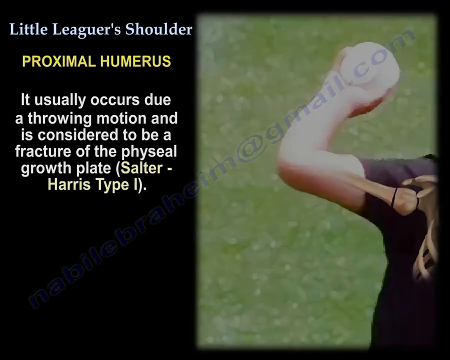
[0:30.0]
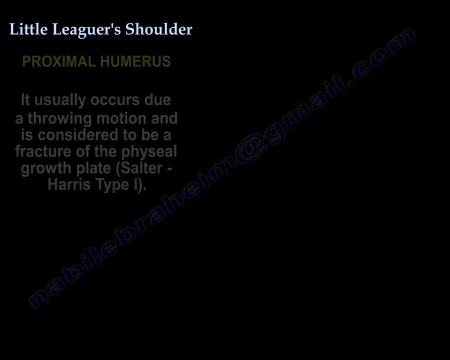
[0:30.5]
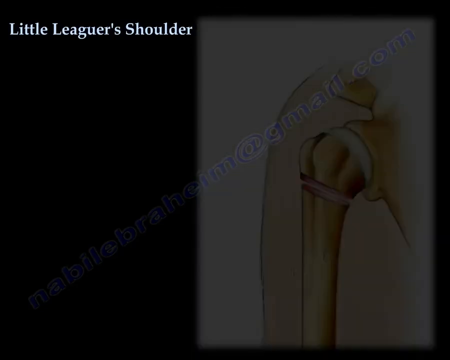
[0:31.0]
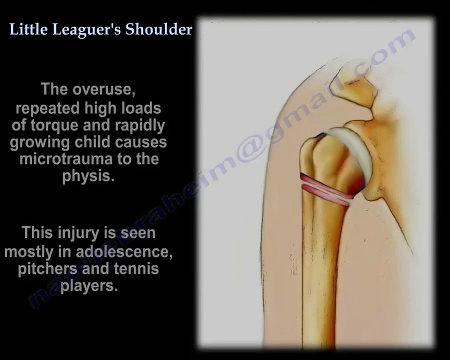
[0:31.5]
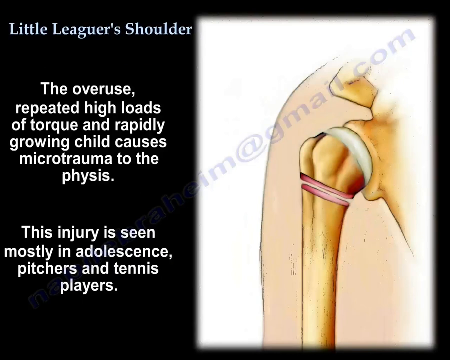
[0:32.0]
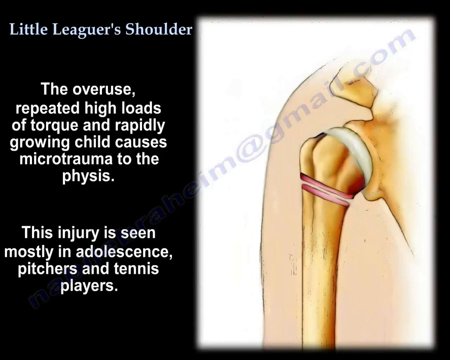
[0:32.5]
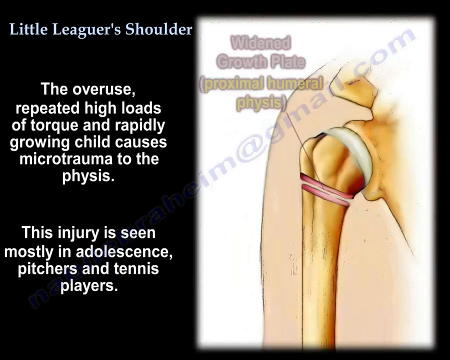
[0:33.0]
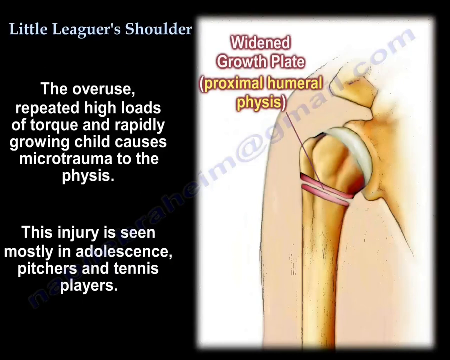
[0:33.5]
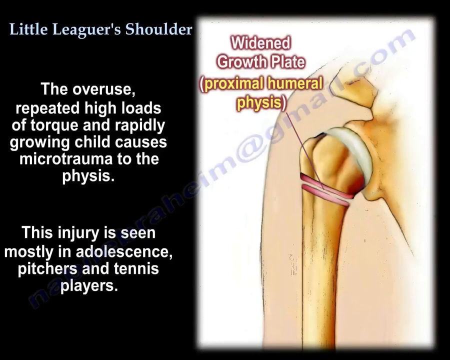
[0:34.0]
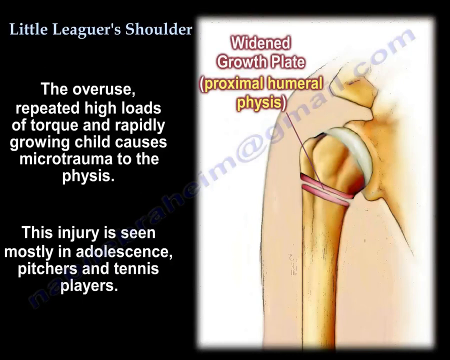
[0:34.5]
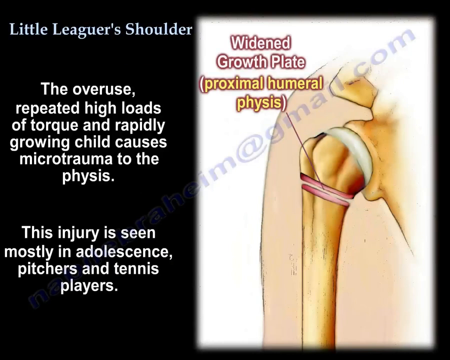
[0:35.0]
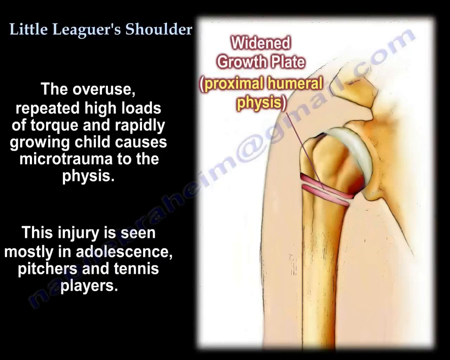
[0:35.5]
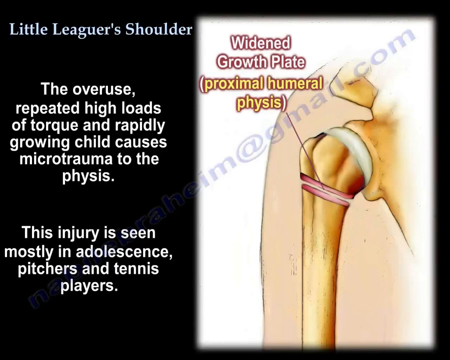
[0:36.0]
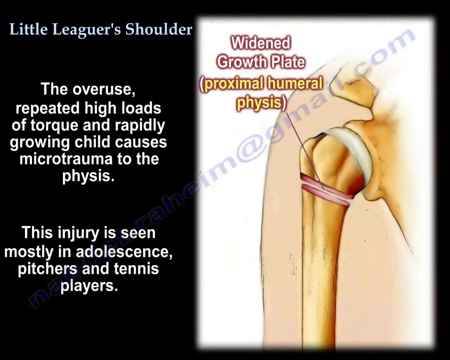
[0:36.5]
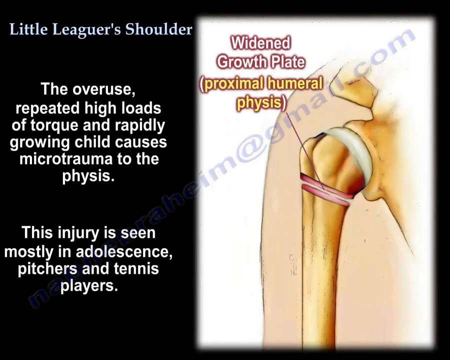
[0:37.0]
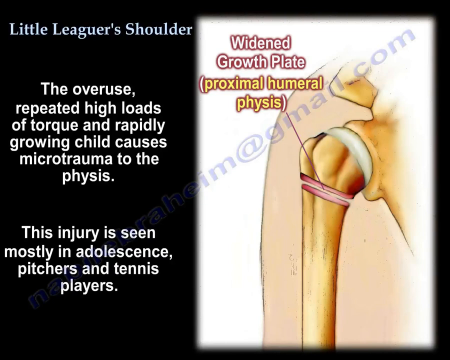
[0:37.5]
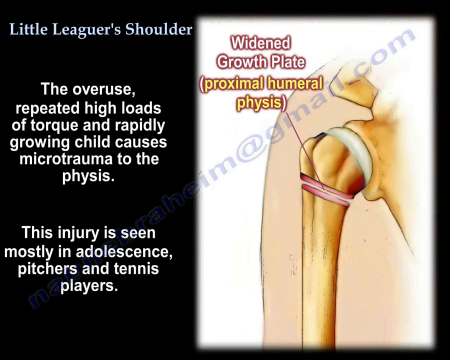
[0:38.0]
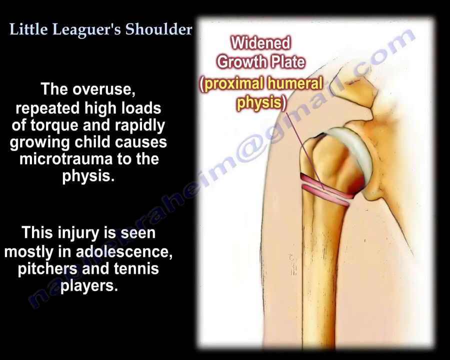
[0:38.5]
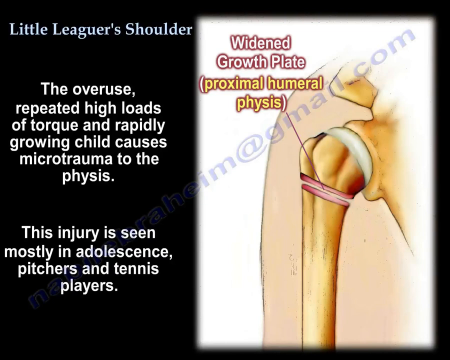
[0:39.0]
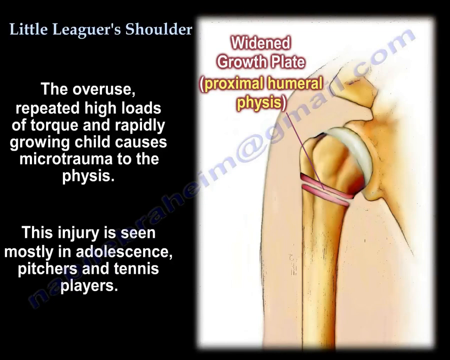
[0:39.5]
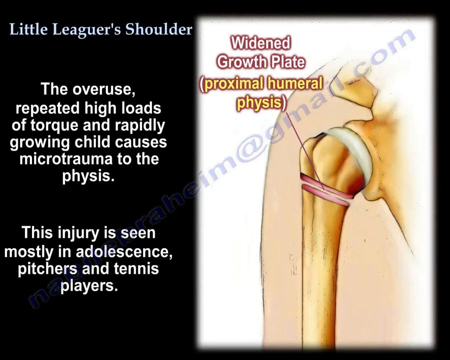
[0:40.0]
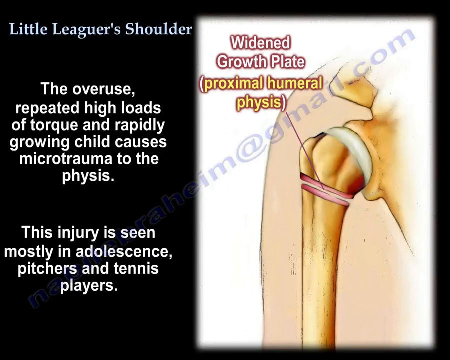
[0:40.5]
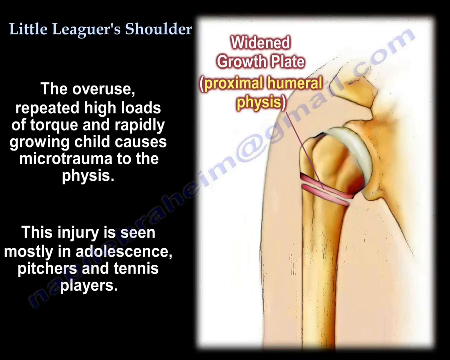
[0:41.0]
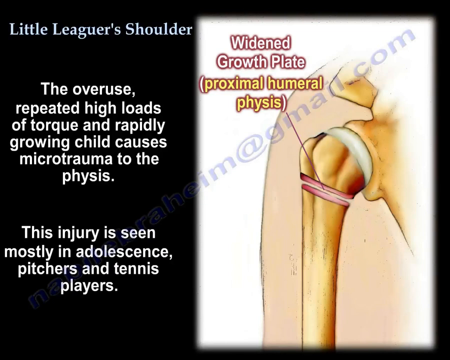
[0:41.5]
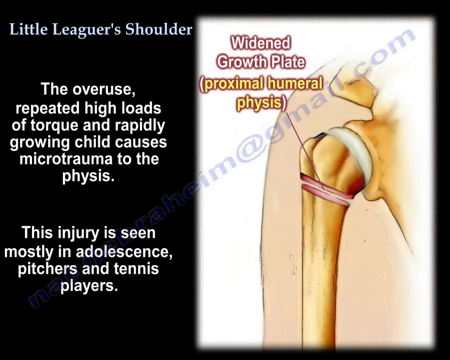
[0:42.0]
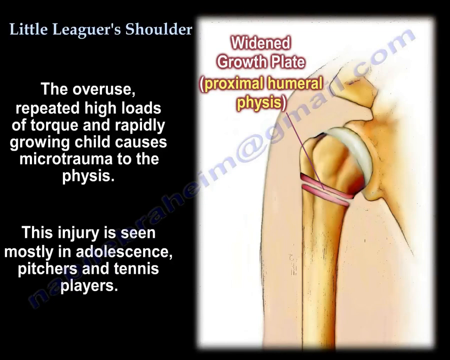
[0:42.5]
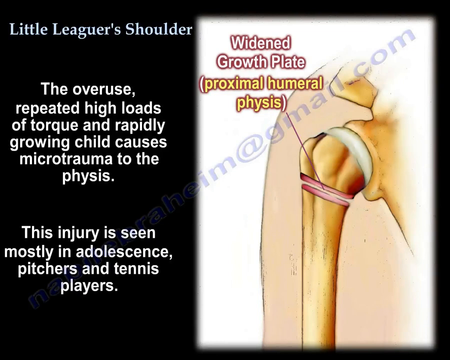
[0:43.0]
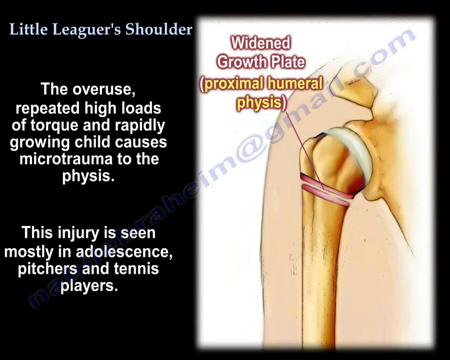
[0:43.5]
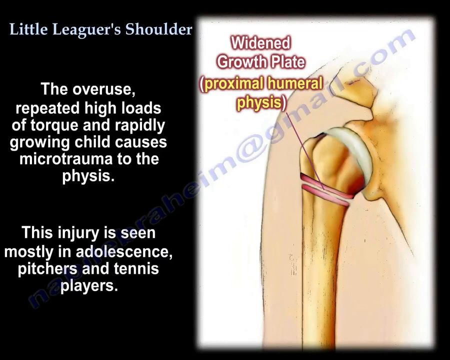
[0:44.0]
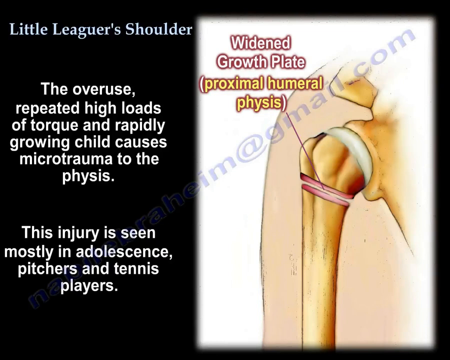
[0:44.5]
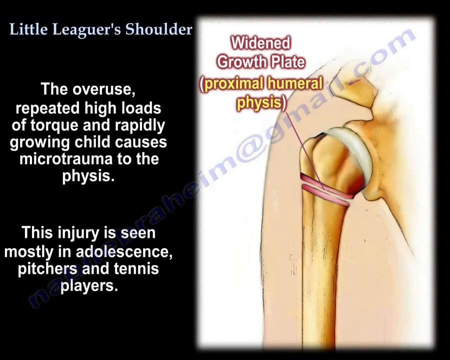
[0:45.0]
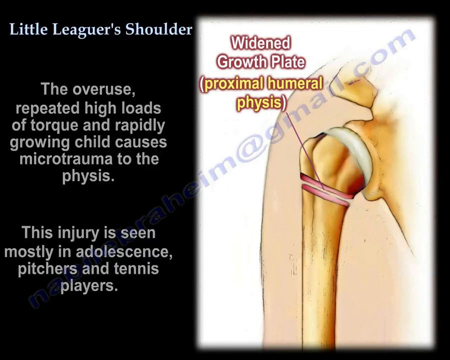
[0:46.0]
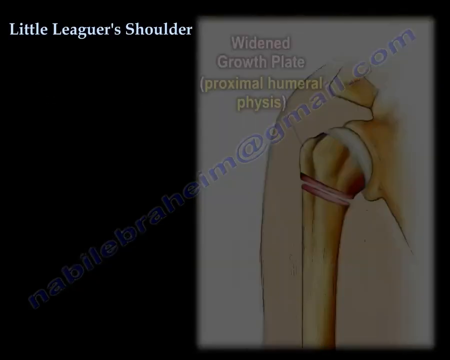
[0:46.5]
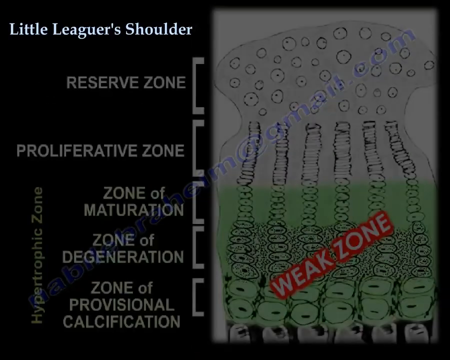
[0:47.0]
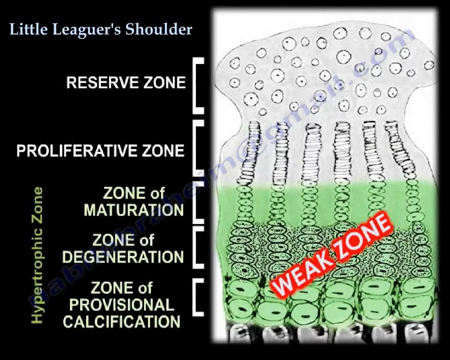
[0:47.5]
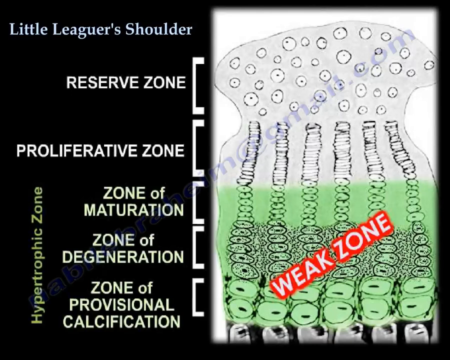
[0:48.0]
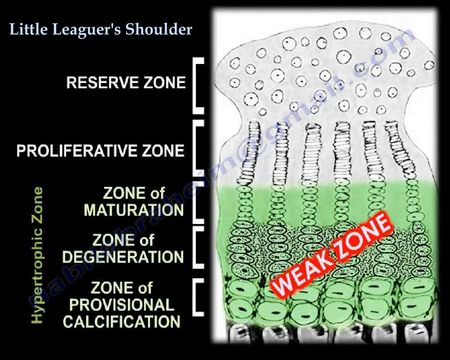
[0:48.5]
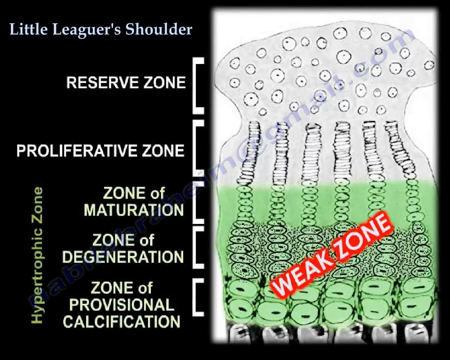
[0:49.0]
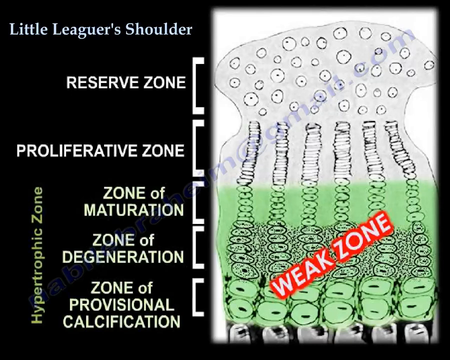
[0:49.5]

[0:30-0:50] A young man in a black t-shirt throws a baseball on the right-hand side of the screen, with green grass behind him. On the left-hand side the text reads "little leaguer shoulder", then "proximal humerus" in all uppercase yellow letters, and below this "it usually occurs due a throwing motion and is considered to be a fracture of the physio growth plate." The screen cuts away to a close-up diagram of the shoulder on the right-hand side, with a white background. At the top left the text reads "little leaguer shoulder", and below that "the overuse repeated high loads of torque and rapidly growing child causes micro trauma to the" followed by "This injury is seen mostly in adolescent pitchers and tennis players." A caption reads "widened growth plate proximal humeral physis", with an arrow pointing to this part of the shoulder on the diagram. A new graphic then emerges, saying "weak zone" in red and white uppercase letters. On the left-hand side the text says "little leaguer shoulder", and below that it gives five different zones of how the pain is progressing. The graphic is very difficult to understand.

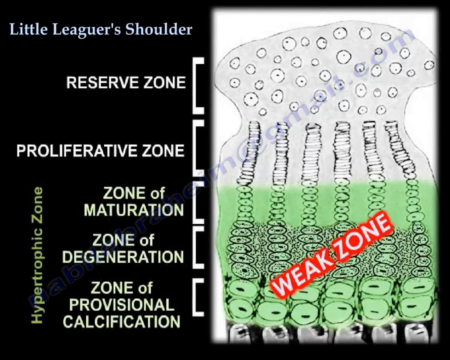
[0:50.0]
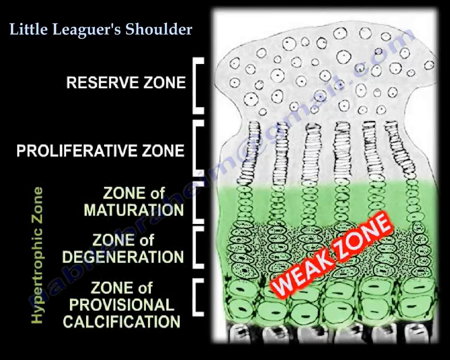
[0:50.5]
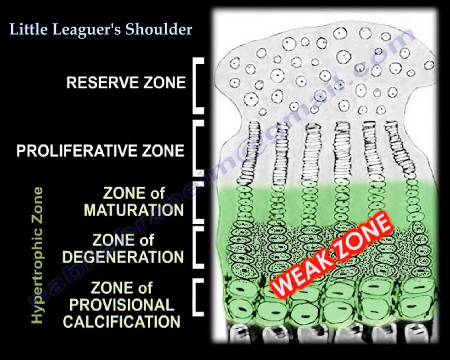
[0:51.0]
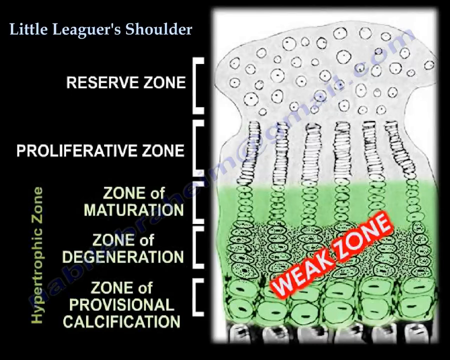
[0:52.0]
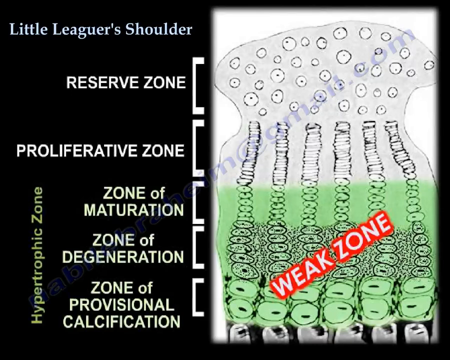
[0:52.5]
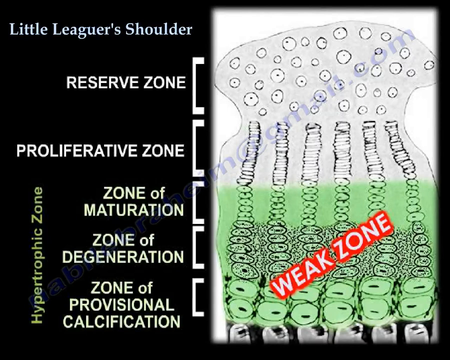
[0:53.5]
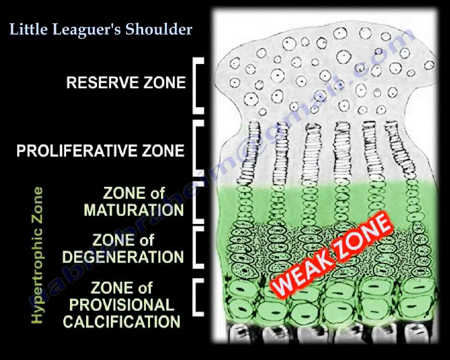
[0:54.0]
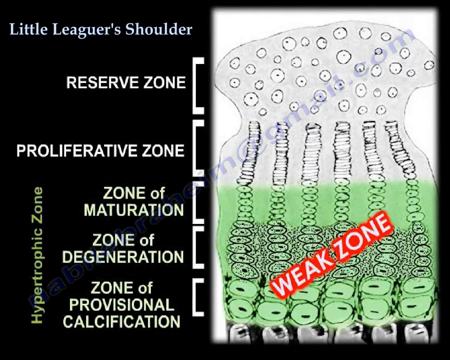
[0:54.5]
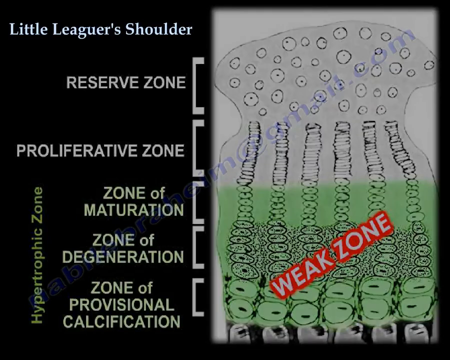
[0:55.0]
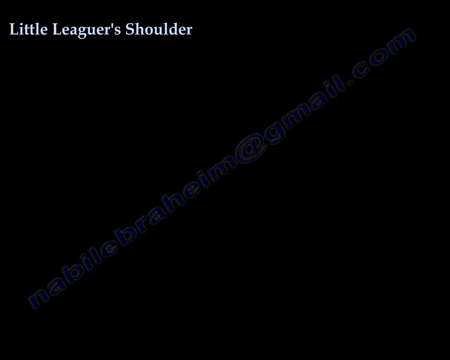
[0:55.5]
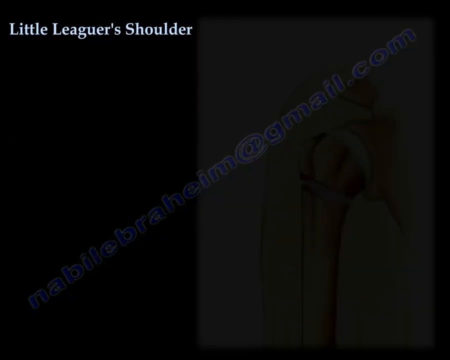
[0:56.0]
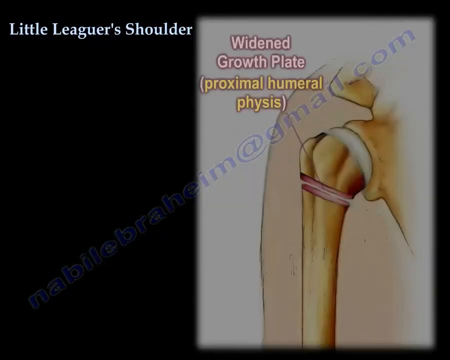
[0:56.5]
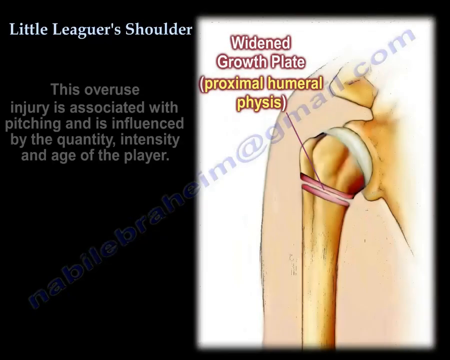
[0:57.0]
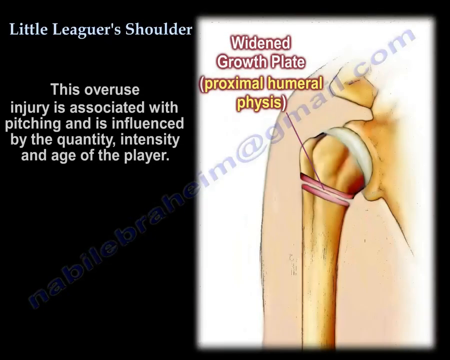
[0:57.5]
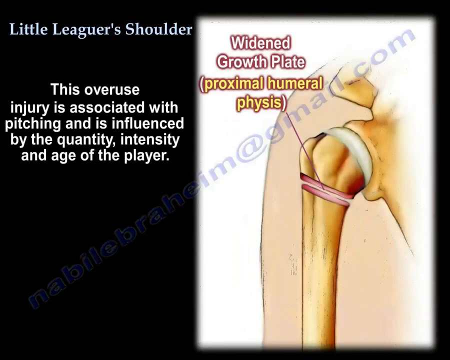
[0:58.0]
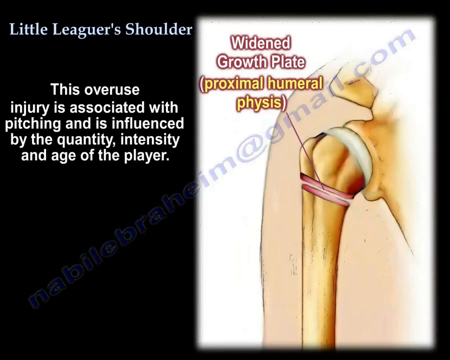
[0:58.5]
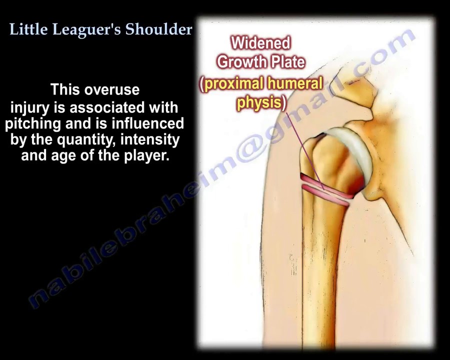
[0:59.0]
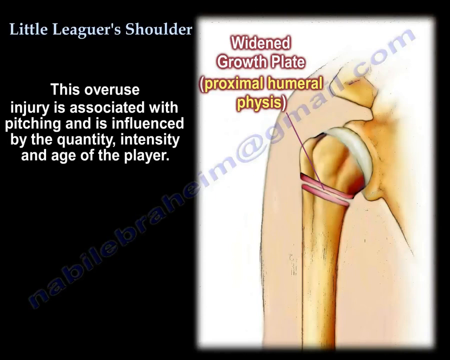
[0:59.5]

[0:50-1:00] On the right-hand side of the screen is a diagram that is difficult to make out, in gray, white and green. A graphic reads "weak zone" in all uppercase white letters with a red border. At the top left, blue letters say "little leaguer shoulder", and below that five brackets are listed vertically: the top one says "reserves zone", the second says "proliferative zone", and there are three other zones below. The left-hand side also reads "hypertrophic zone" in yellow letters. What the diagram shows is difficult to make out. The view then pans away to a different screen: another close-up diagram of a shoulder with a caption that says "widened growth plate proximal humeral physis" and an arrow pointing to this part of the shoulder. On the left-hand side it reads "little leaguer shoulder", and below that "this overuse injury is associated with pitching and is influenced by the quantity intensity and age of the player."